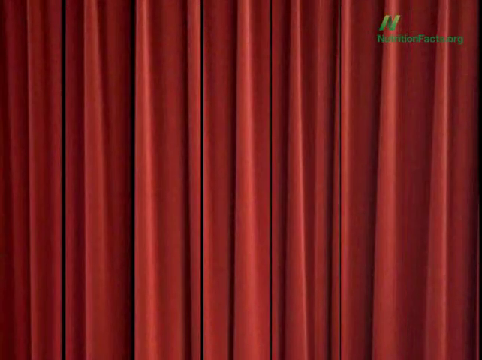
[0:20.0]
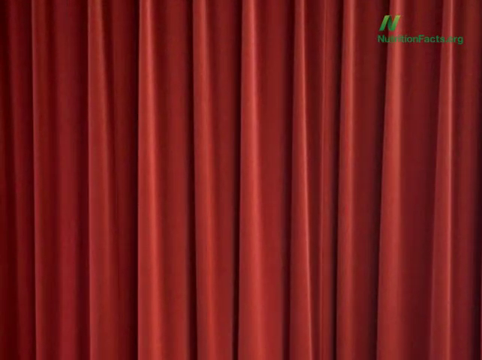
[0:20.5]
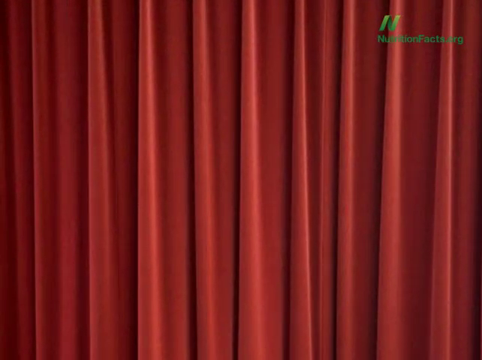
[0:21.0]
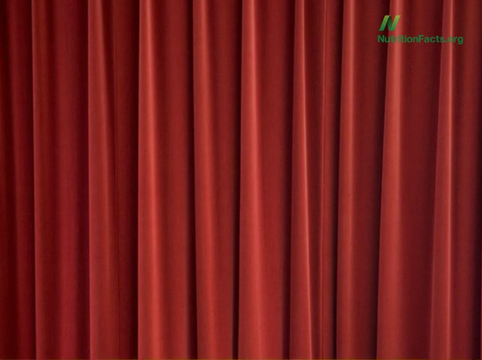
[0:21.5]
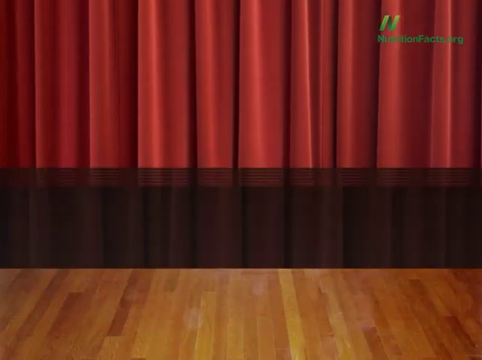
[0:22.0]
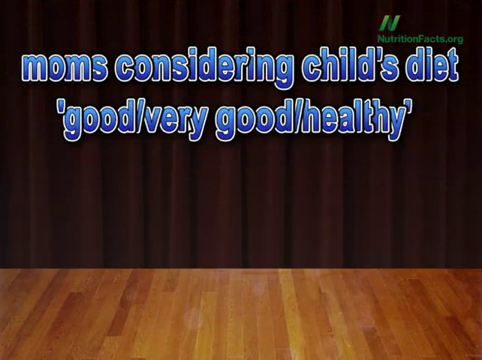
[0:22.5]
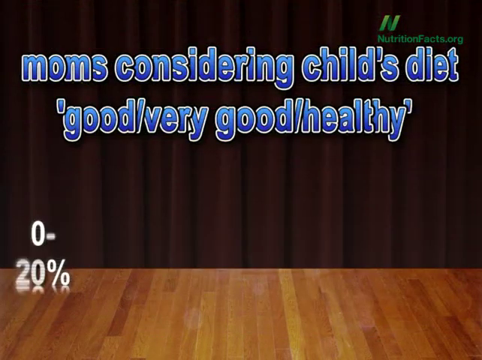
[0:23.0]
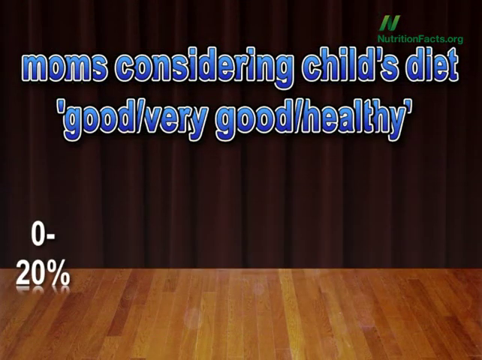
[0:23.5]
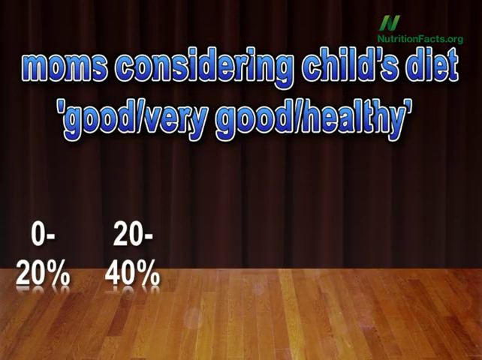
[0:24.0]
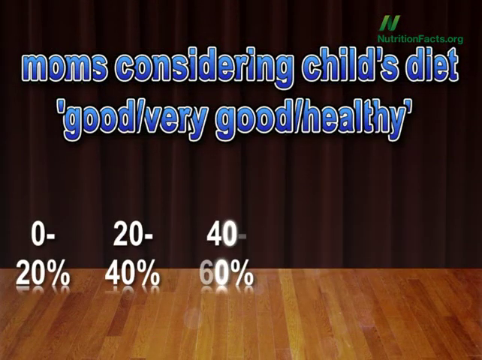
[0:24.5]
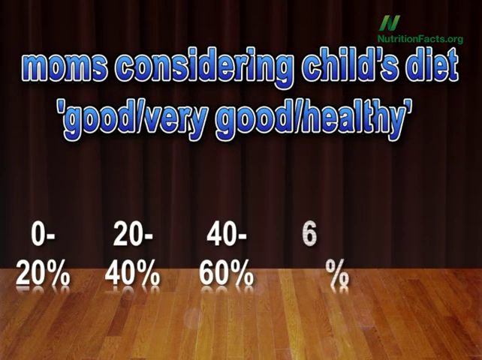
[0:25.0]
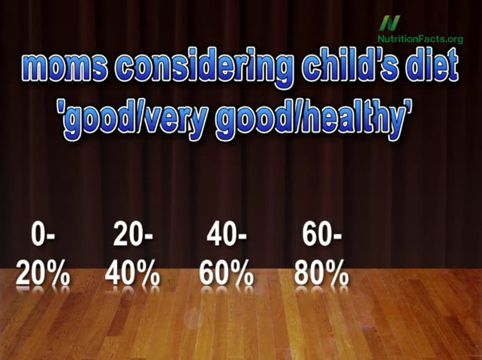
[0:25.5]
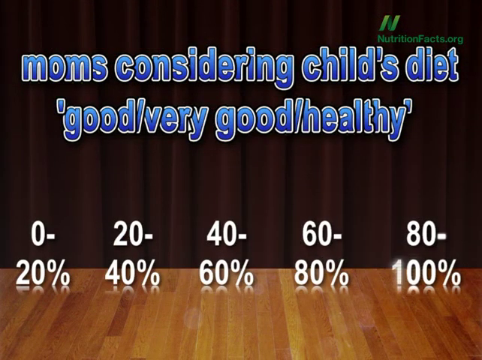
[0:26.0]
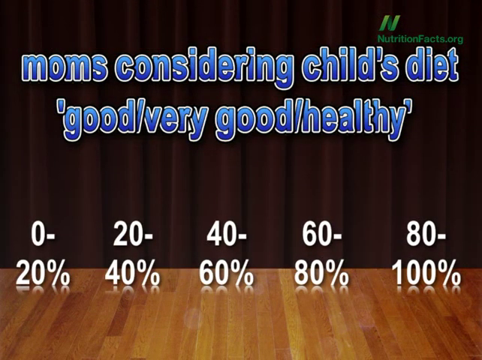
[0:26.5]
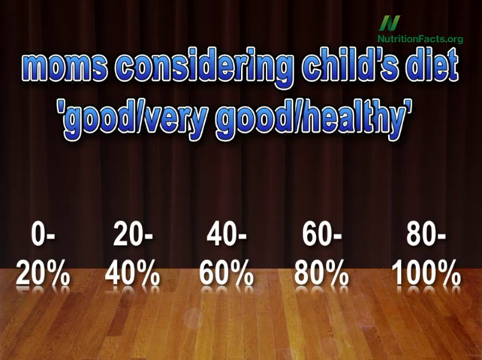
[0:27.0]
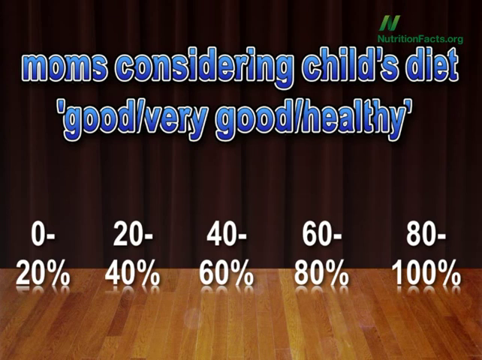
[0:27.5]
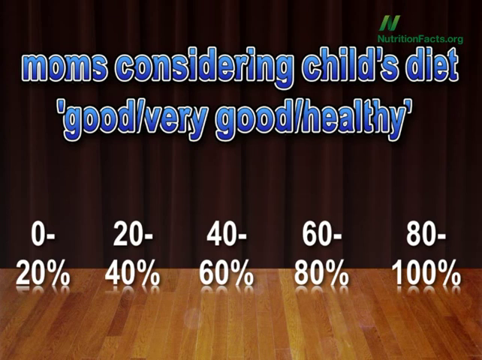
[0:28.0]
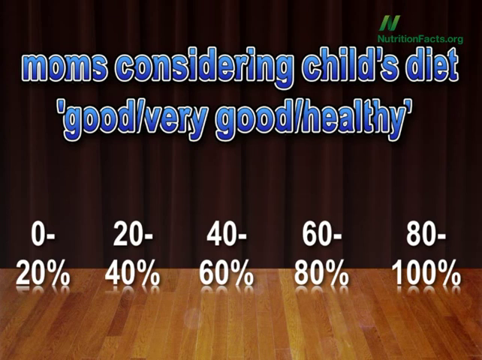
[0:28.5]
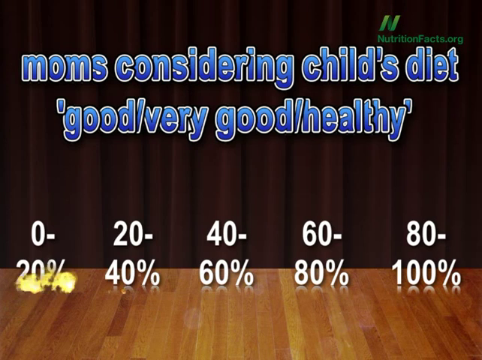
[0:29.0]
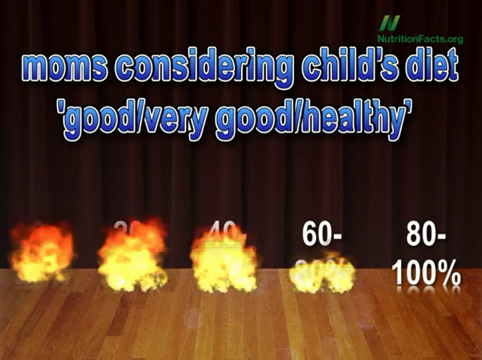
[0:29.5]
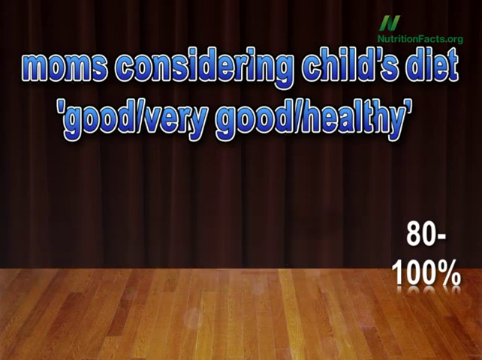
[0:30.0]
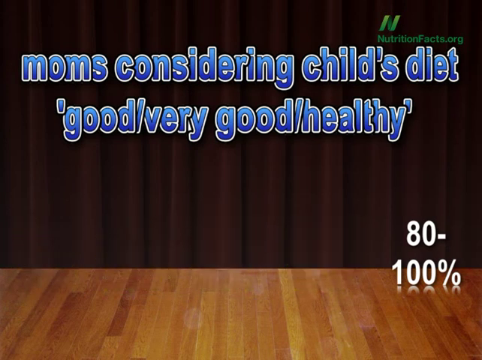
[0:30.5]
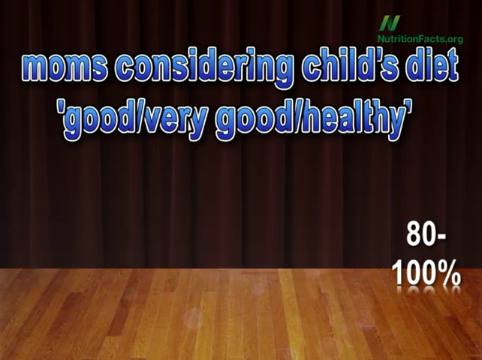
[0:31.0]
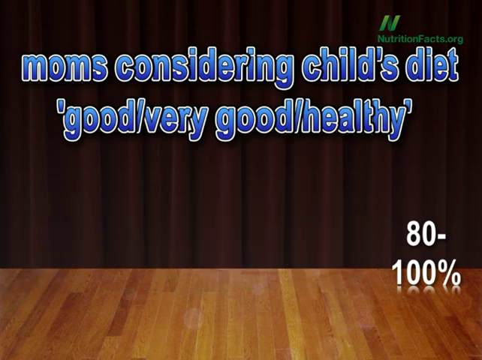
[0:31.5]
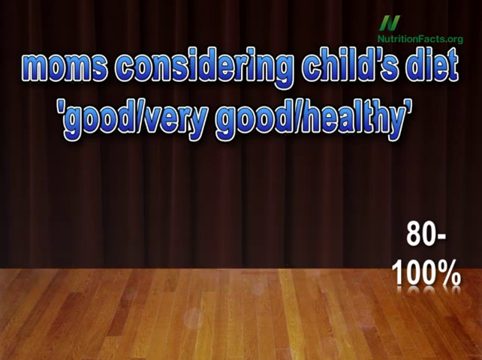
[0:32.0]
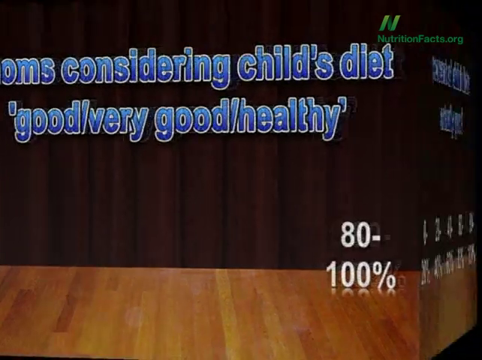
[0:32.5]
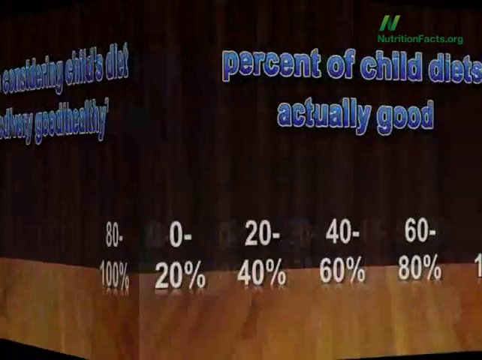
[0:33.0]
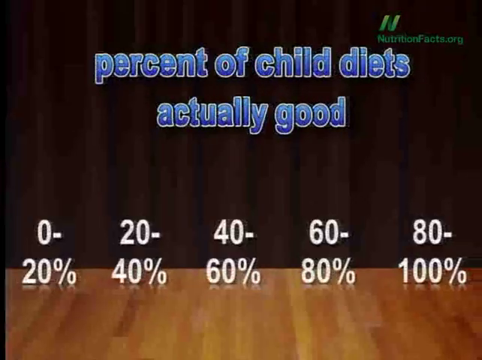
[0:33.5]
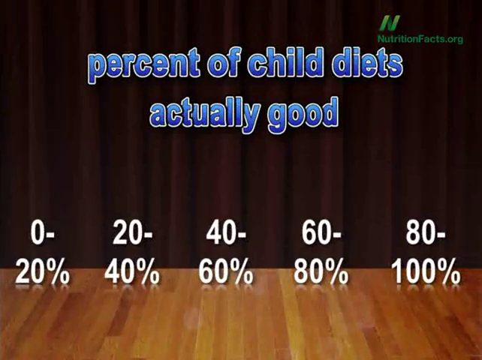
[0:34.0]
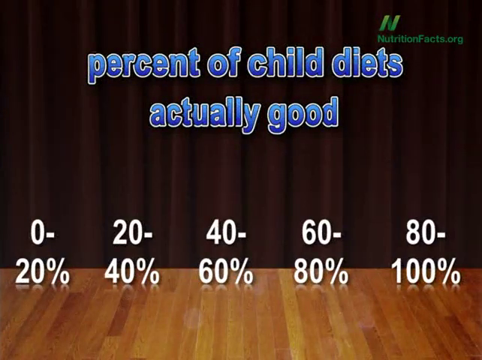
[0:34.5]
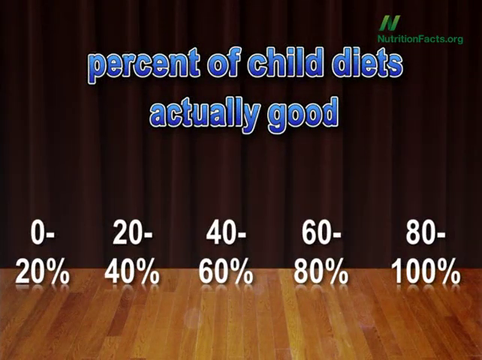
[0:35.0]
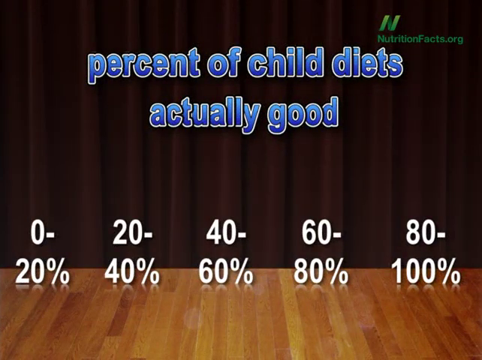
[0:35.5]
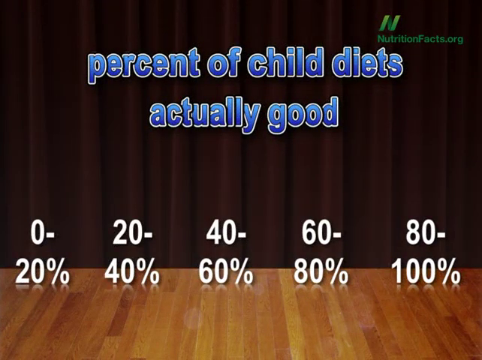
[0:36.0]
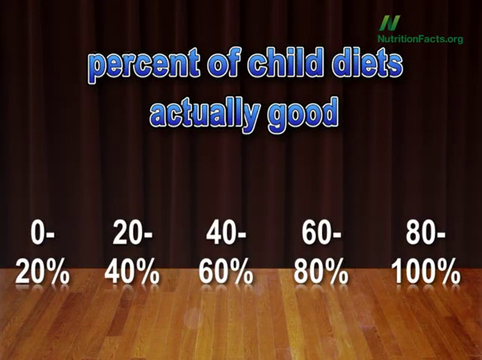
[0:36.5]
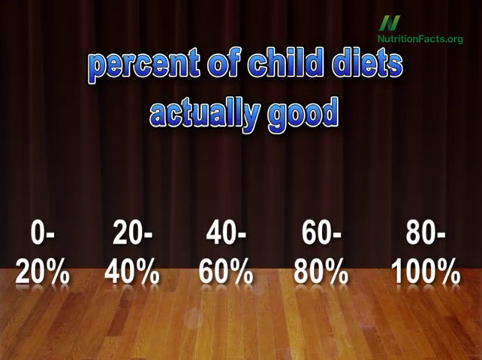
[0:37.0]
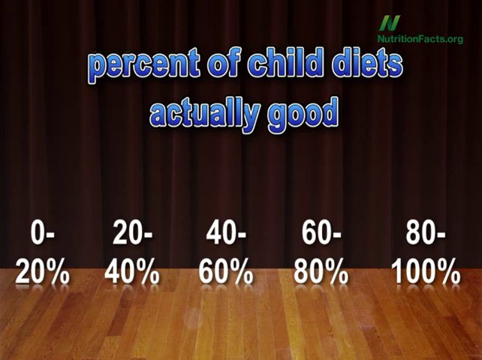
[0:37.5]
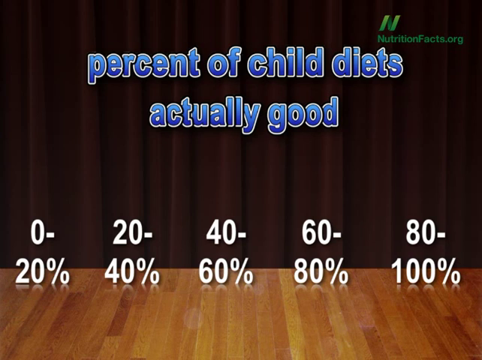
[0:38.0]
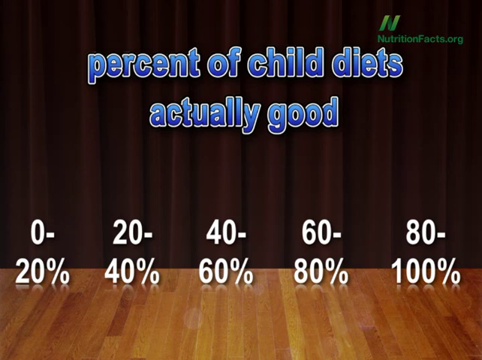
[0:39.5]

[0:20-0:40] A red curtain effect transitions into the next section; the curtain lifts to reveal a graphic. Text at the top reads "mom's considering child's diet good very good healthy," and along the bottom are percentage ranges going from 0 to 100, left to right: "0 to 20," "20 to 40," "40 to 60," "60 to 80" and "80 to 100." The graphic seems to indicate how many moms consider their child's diet good, very good or healthy. An animation burns away the other percentage ranges, apparently leaving 80 to 100% of moms considering their child's diet good or healthy. The same treatment then begins for the percent of child diets that are actually good.